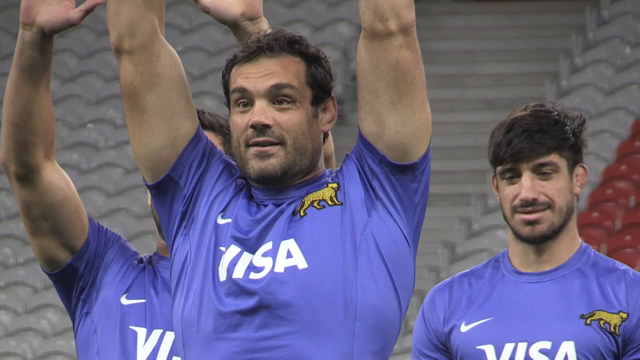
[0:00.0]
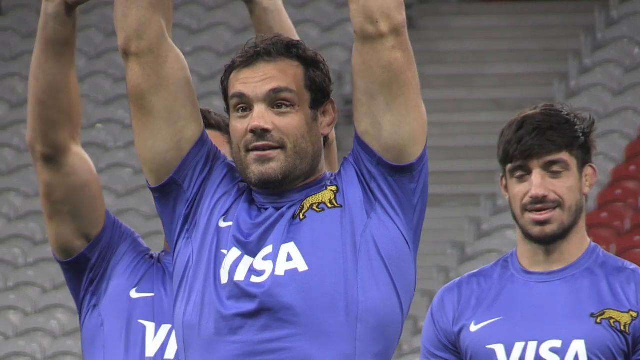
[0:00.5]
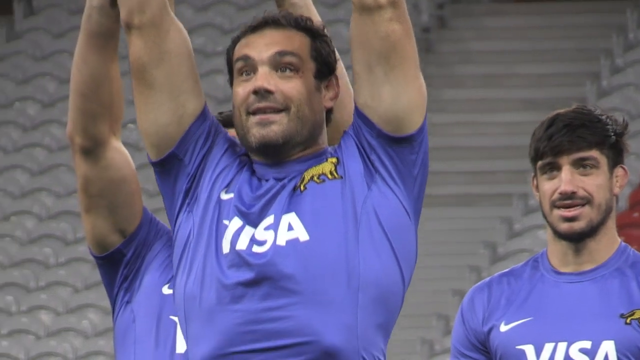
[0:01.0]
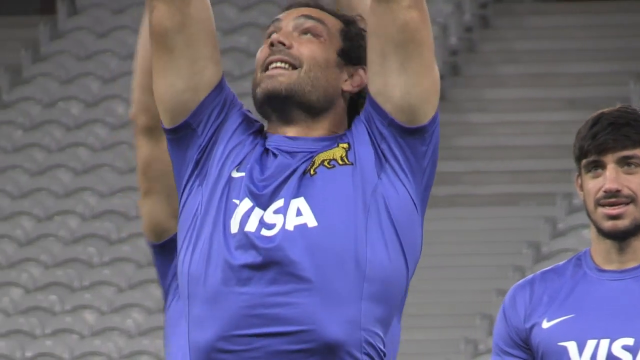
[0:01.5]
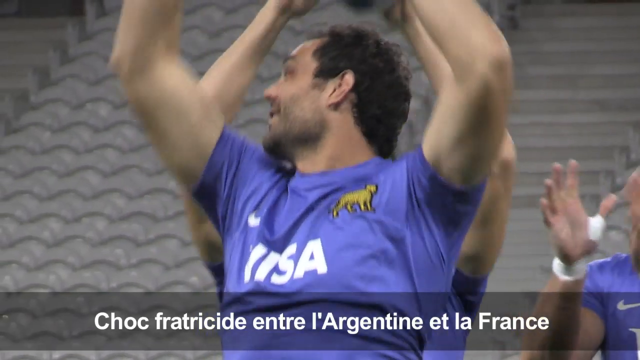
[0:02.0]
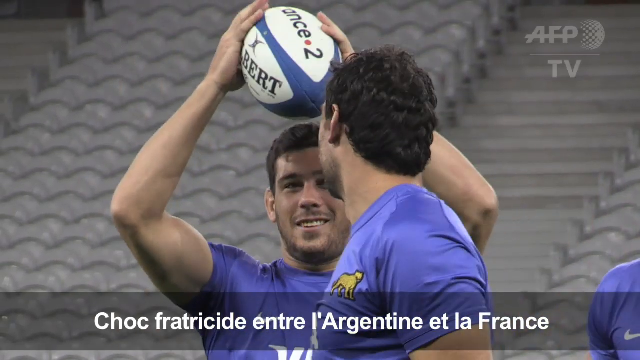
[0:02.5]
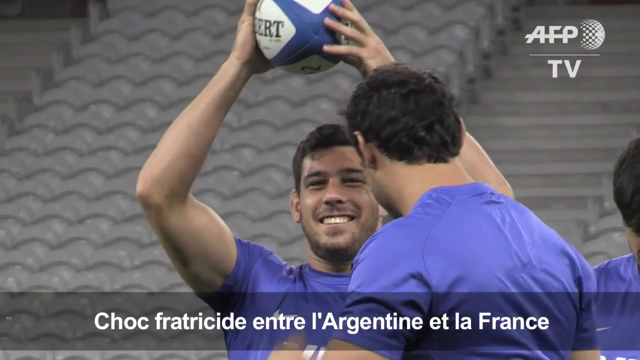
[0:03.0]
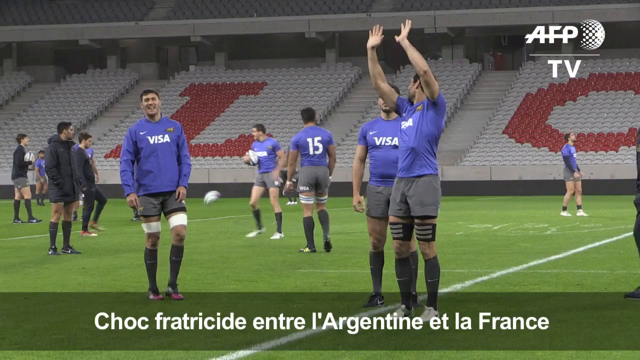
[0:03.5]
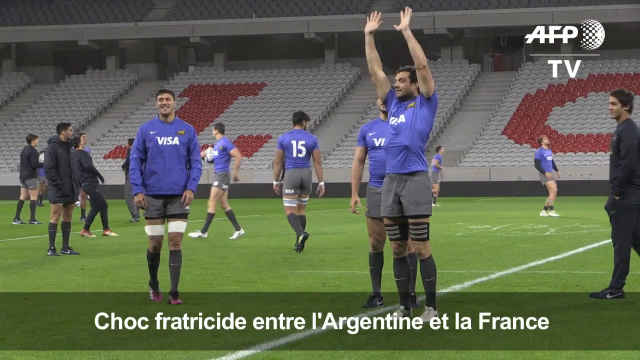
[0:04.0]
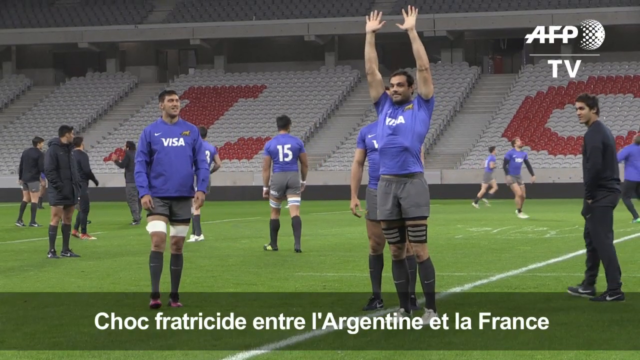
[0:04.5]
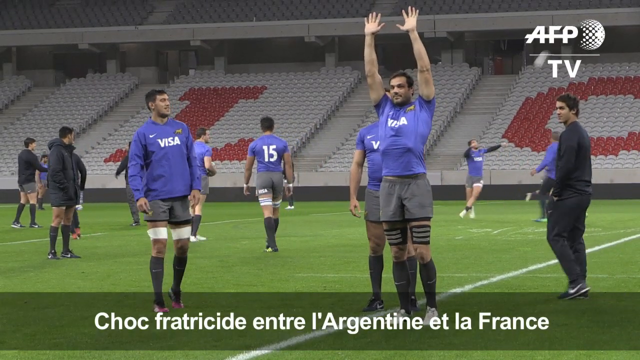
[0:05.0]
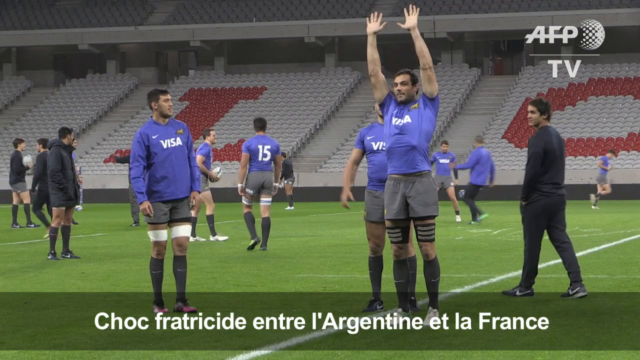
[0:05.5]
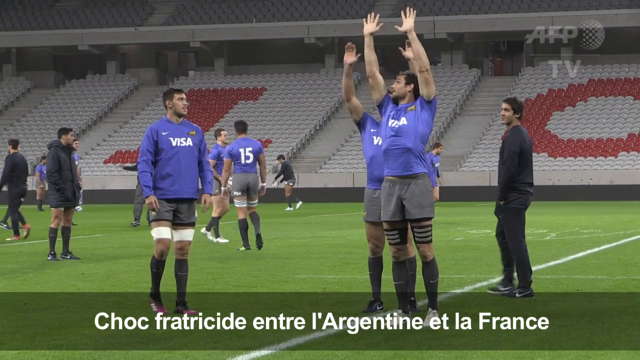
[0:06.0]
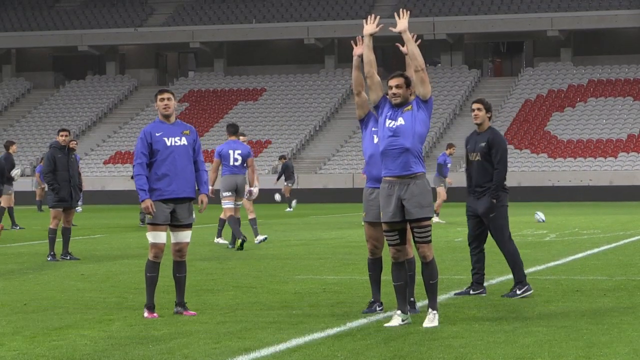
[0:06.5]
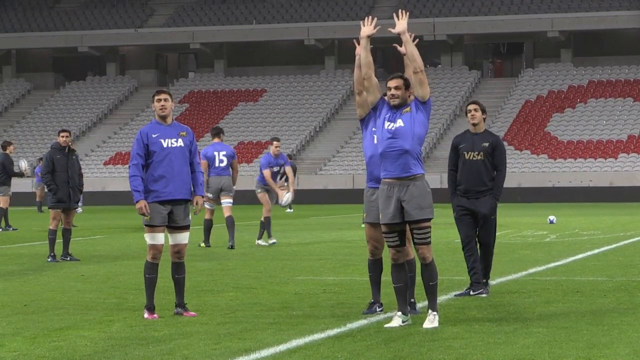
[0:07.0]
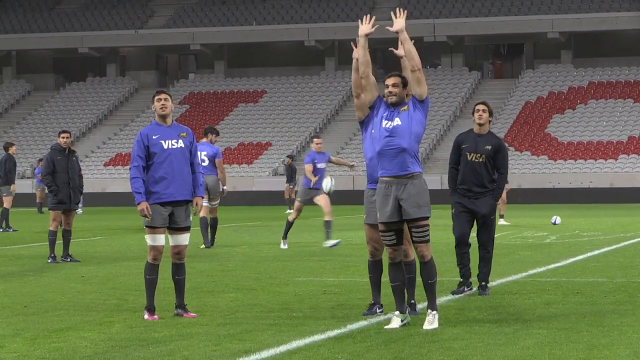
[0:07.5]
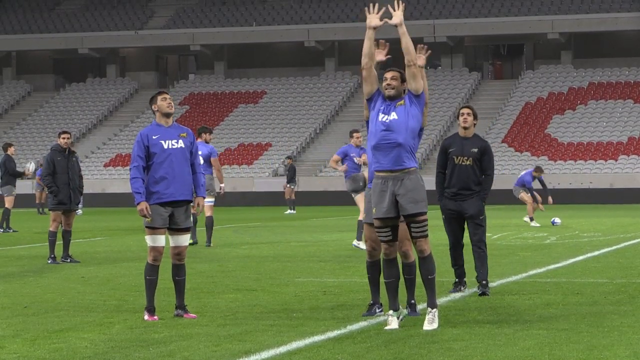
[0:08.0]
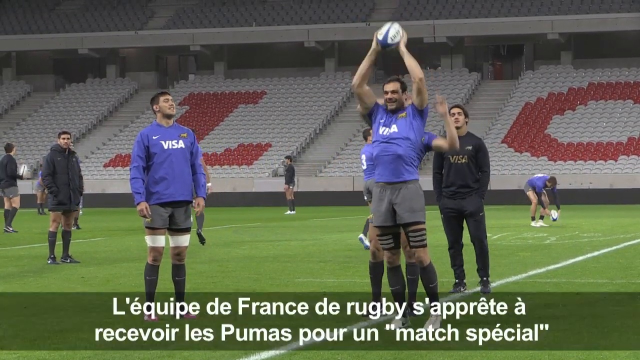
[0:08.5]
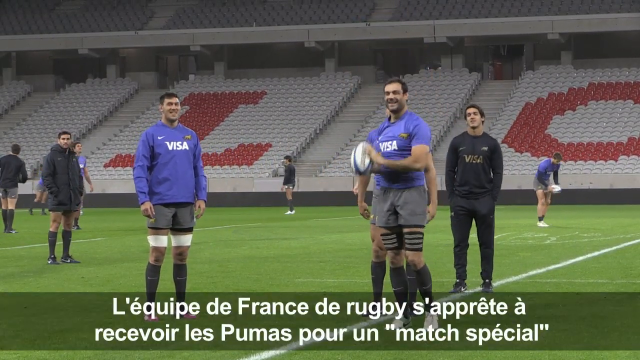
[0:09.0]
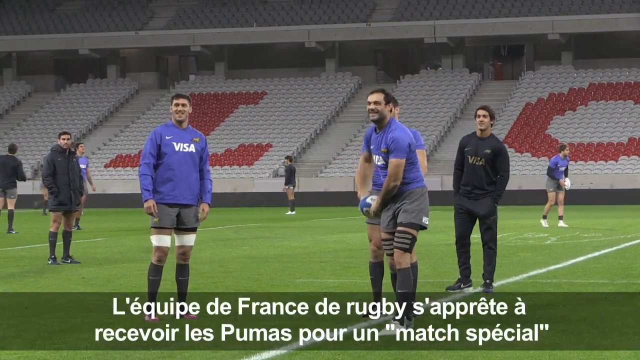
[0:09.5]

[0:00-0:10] Football players in royal blue jerseys with the word "Visa" on them raise their hands above their heads as part of an exercise; their biceps are huge. One bearded player on the right is not raising his hands at this point. The players reach up, and one of them catches the ball. They are at a practice in an empty stadium, with several coaches standing behind the men as they reach up for balls high above their heads.